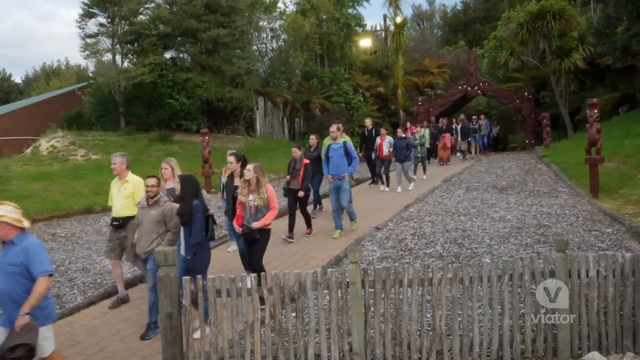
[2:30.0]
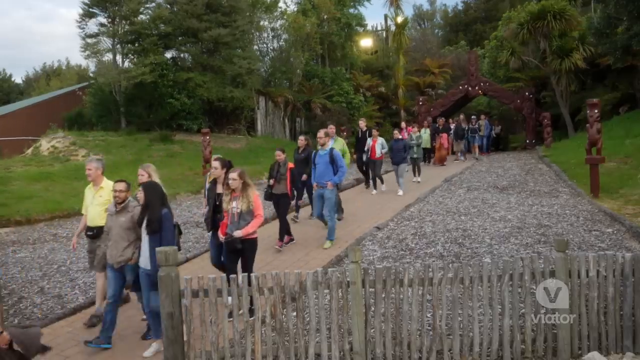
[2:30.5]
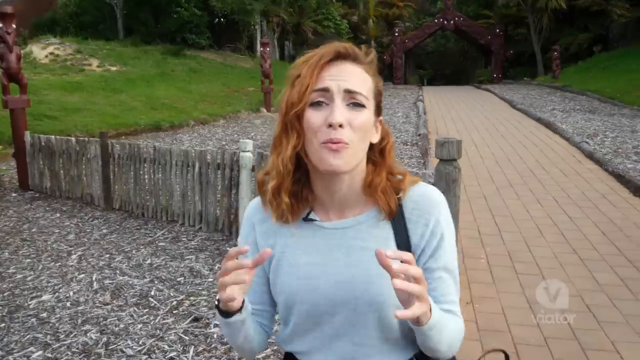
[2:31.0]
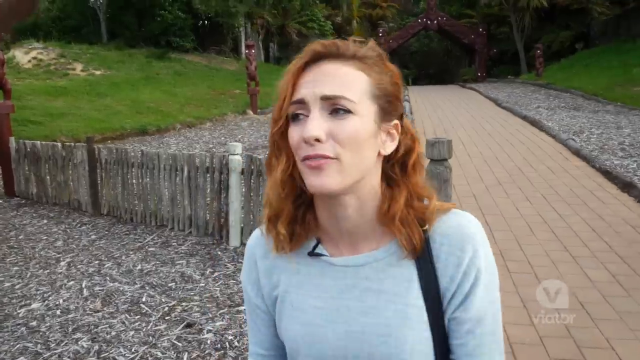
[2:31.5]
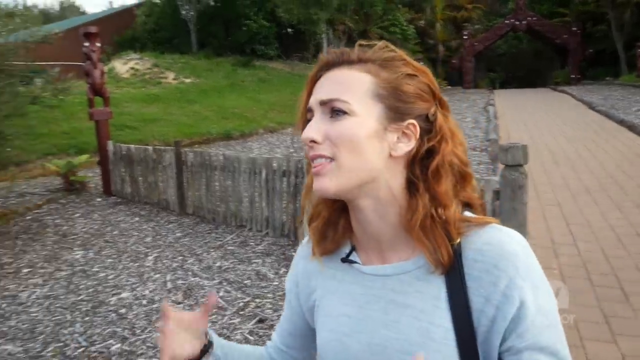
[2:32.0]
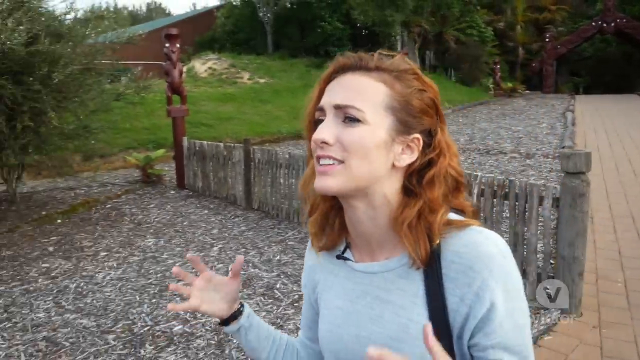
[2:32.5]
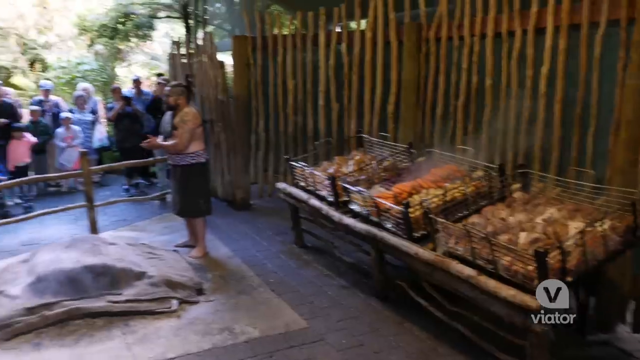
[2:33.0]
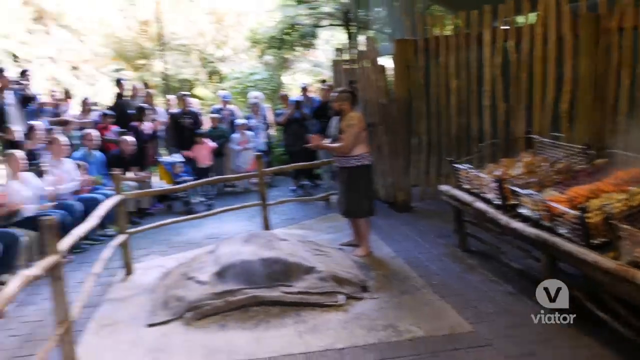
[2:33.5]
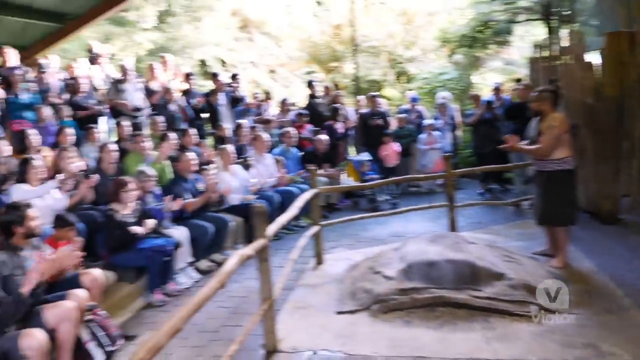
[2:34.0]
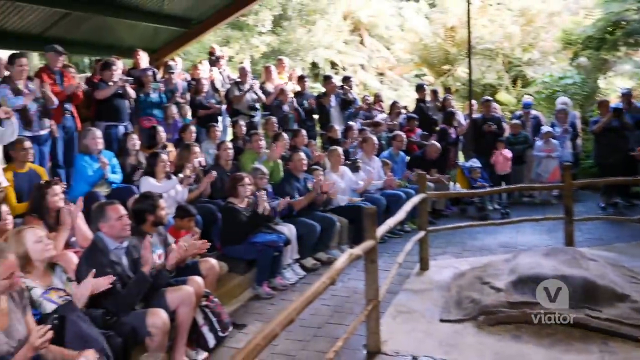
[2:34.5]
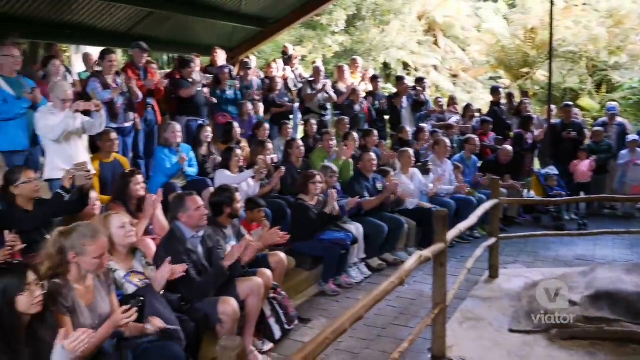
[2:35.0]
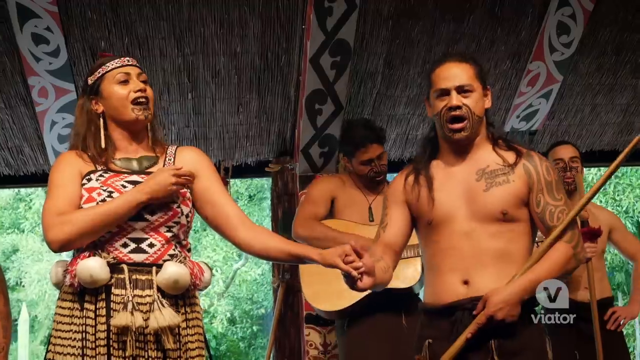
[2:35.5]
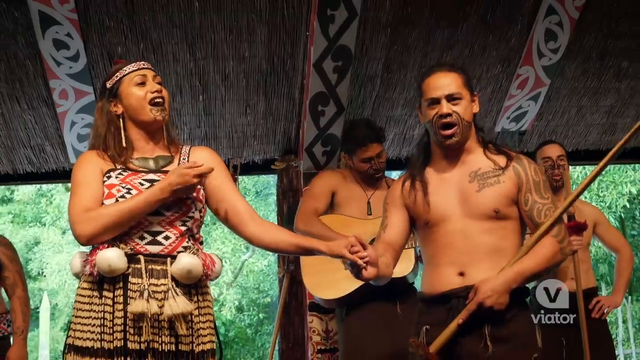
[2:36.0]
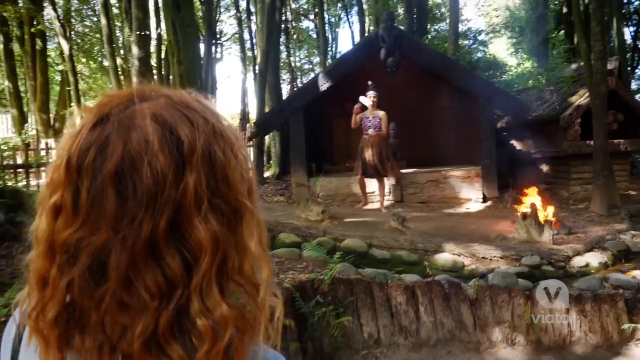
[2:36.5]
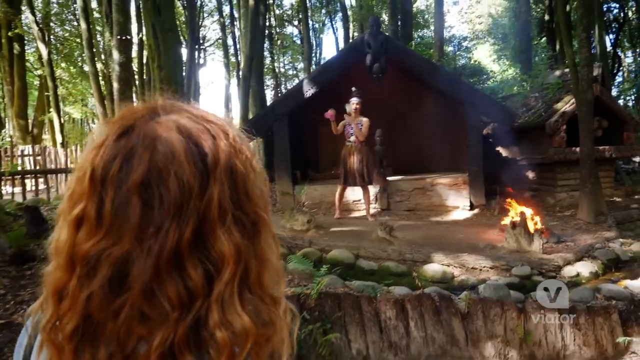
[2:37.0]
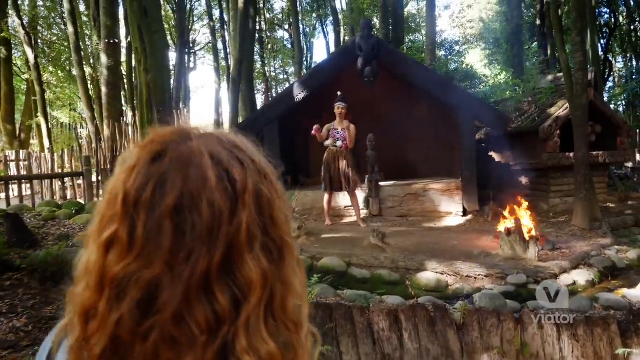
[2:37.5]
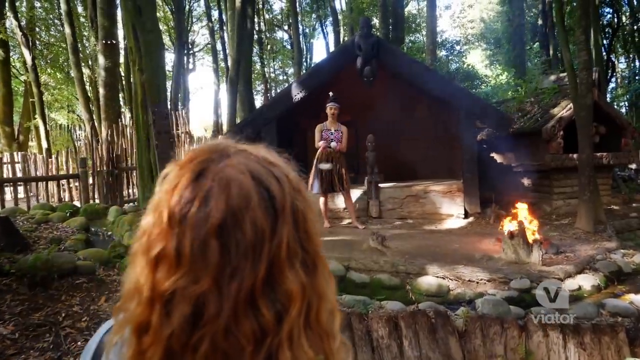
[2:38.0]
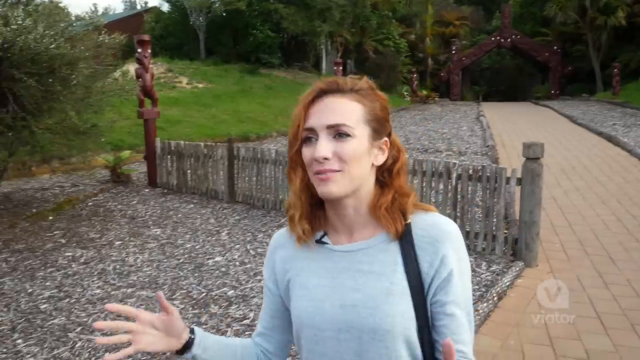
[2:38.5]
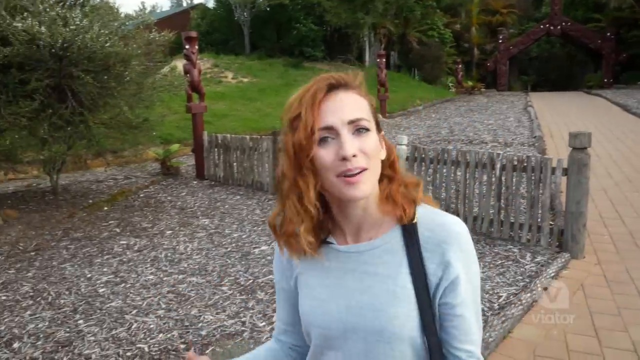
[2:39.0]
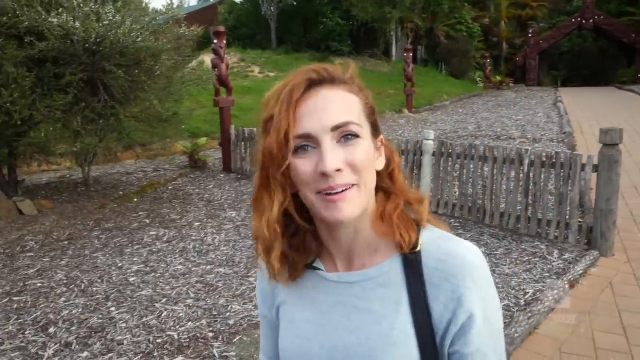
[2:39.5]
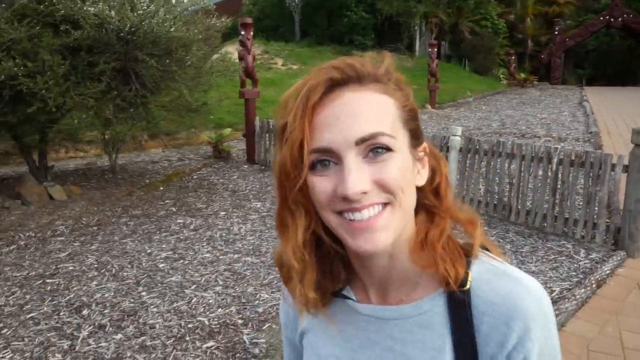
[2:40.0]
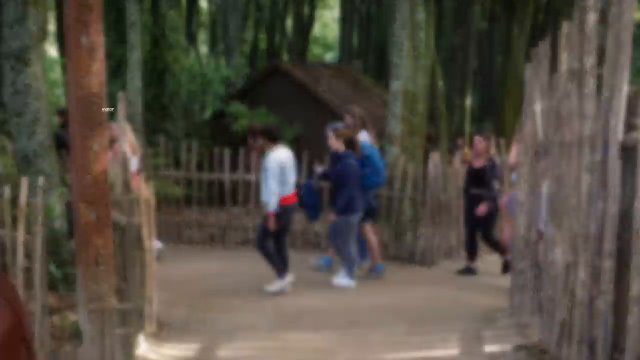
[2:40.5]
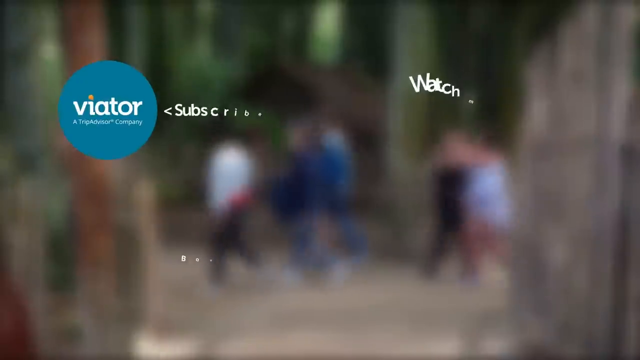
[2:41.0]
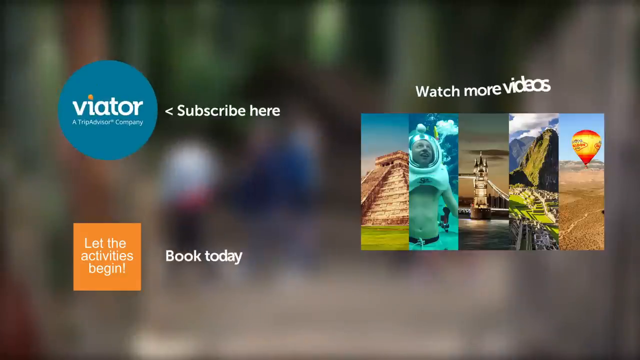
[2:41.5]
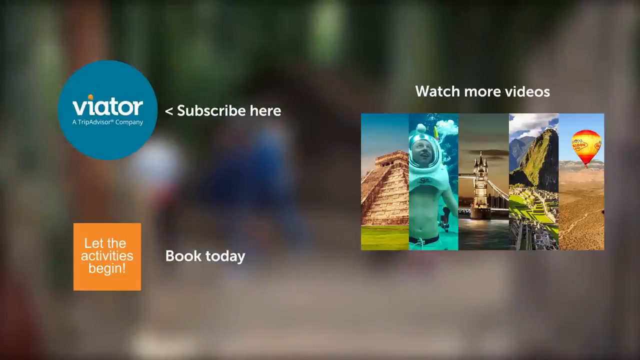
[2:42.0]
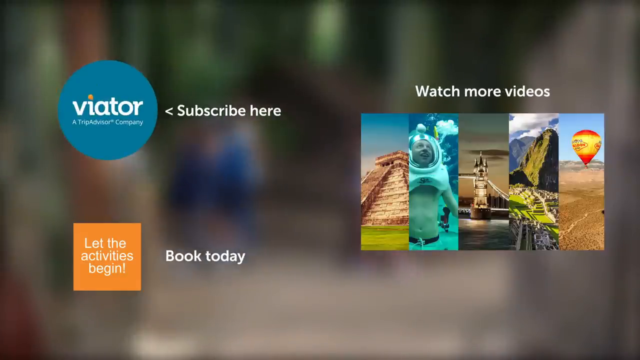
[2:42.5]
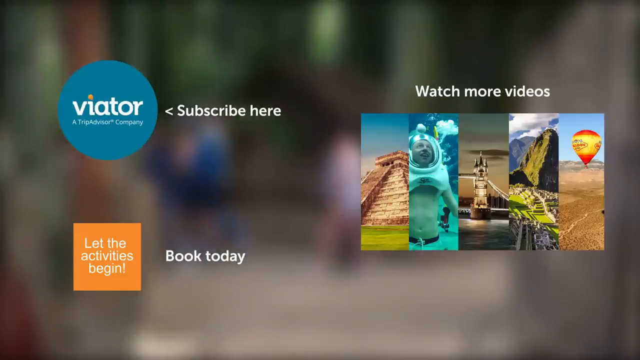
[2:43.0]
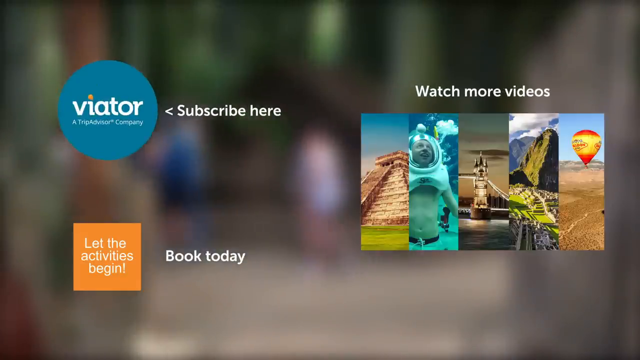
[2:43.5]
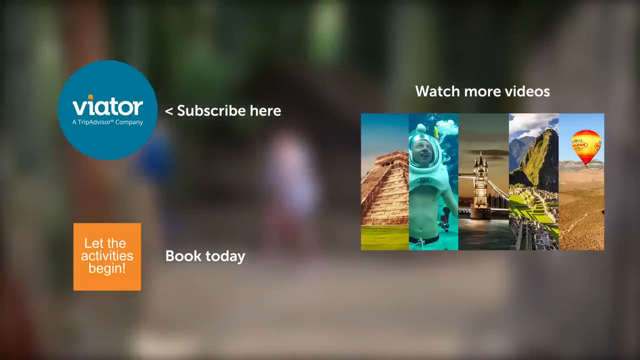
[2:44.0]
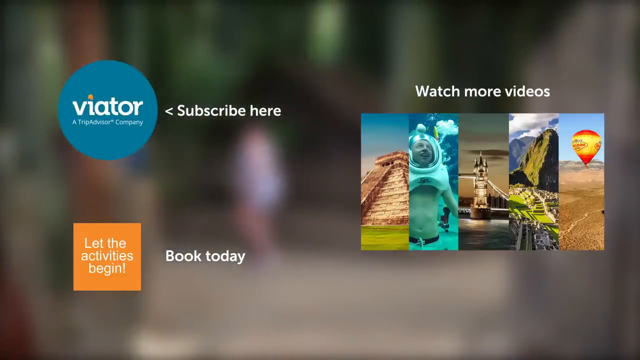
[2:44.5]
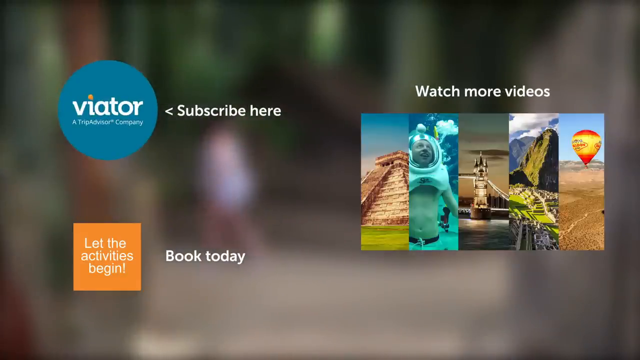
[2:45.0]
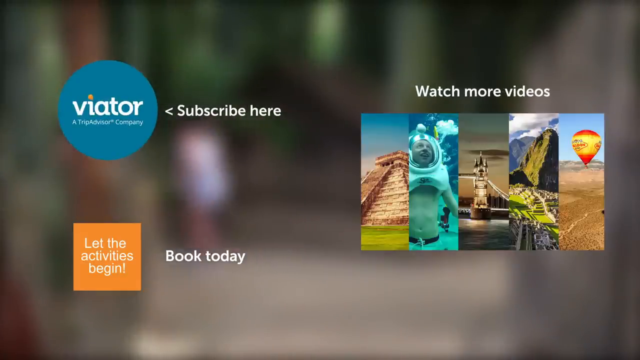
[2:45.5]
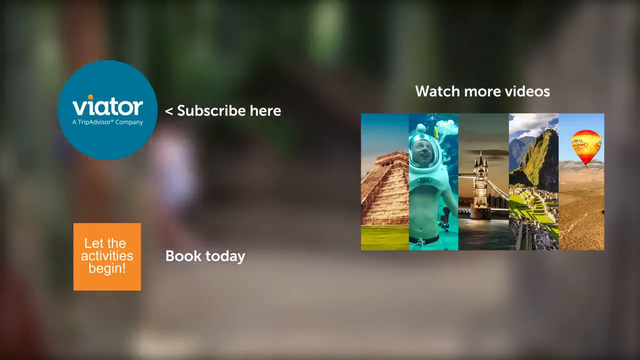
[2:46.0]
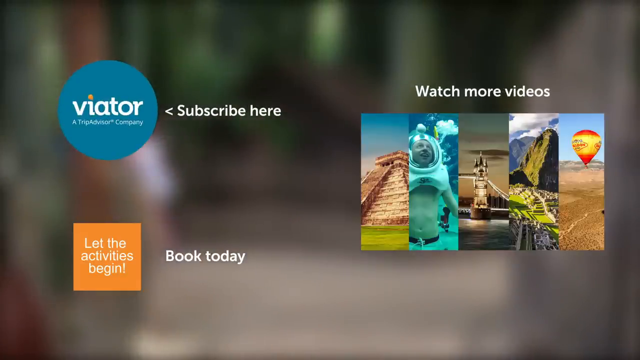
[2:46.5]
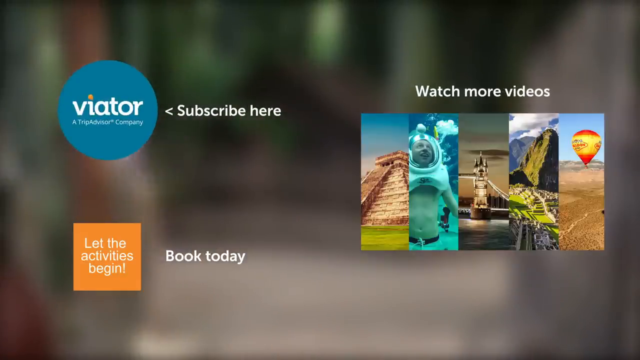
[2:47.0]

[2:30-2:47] A bunch of people walk on a walkway, and the host appears, talking to the camera; she looks like she has had a good time. The shot pans to a crowd outside watching a man in front of them, then shows a native person's face again and a woman swinging a ball around again. A scene from the indoor stage performance shows the man and the woman holding hands, with the man behind them playing guitar. The host talks to the camera again as ending icons for subscribe and book today come on the screen.